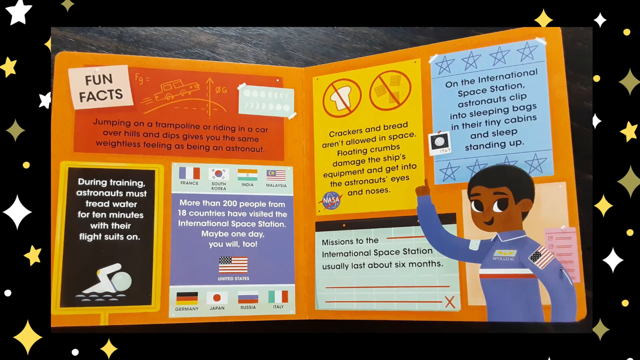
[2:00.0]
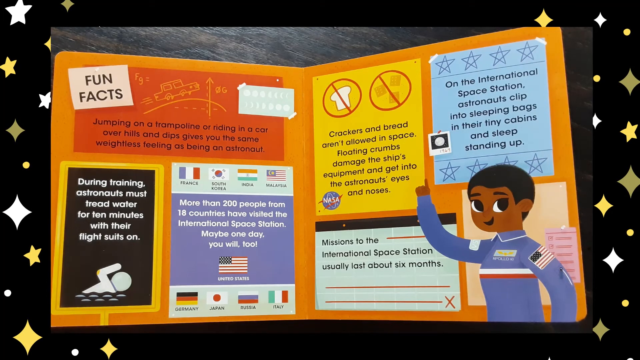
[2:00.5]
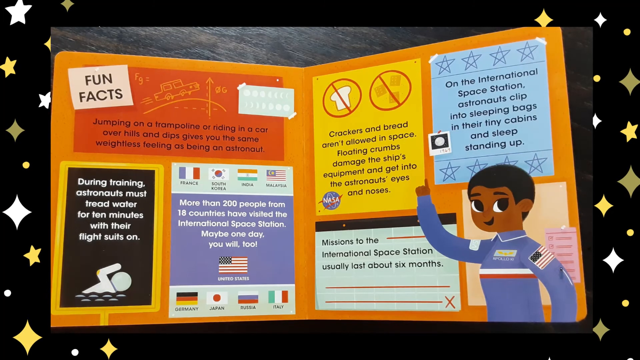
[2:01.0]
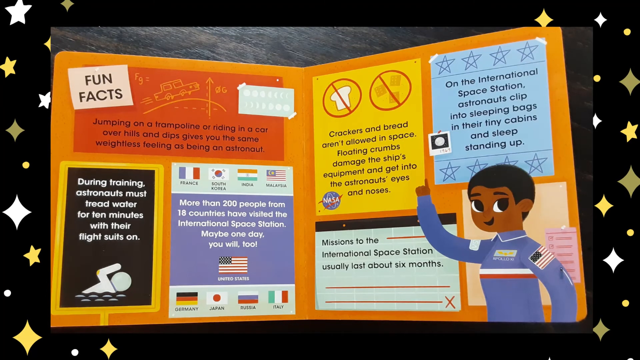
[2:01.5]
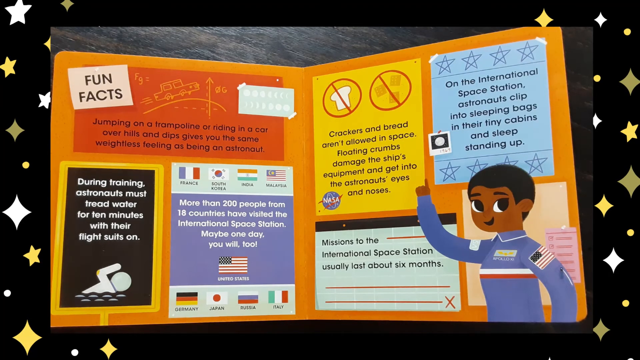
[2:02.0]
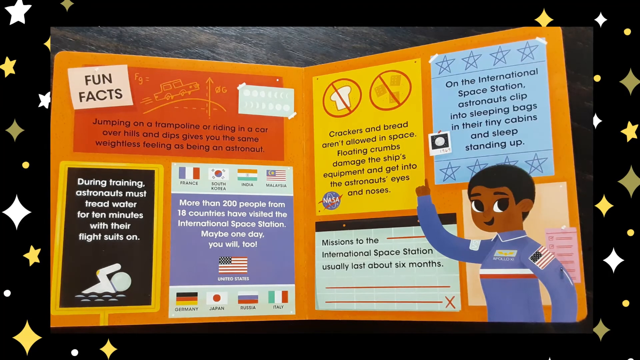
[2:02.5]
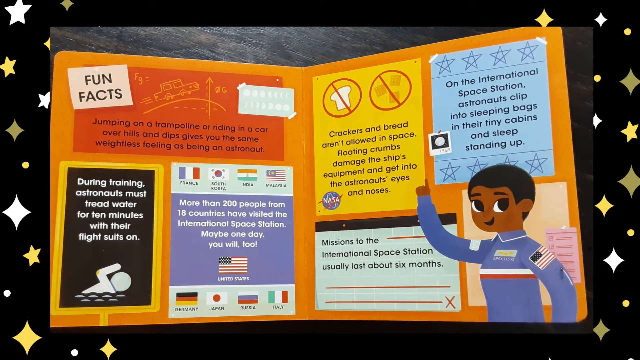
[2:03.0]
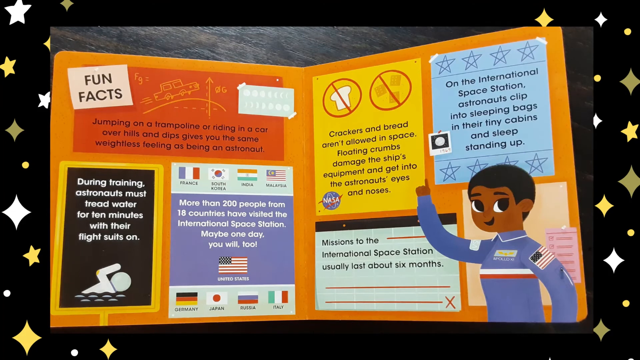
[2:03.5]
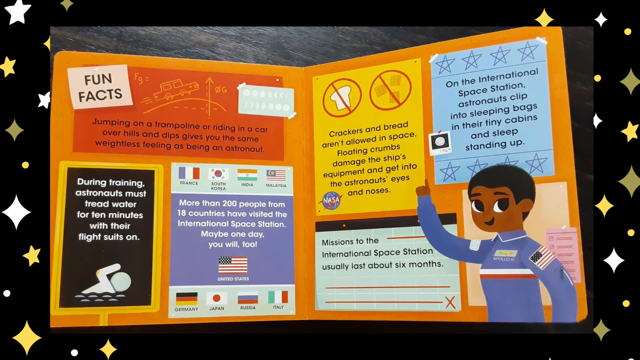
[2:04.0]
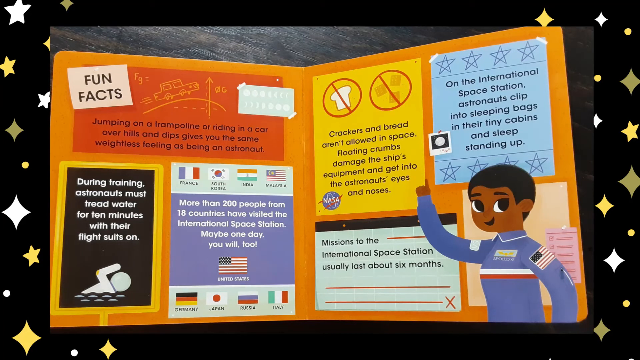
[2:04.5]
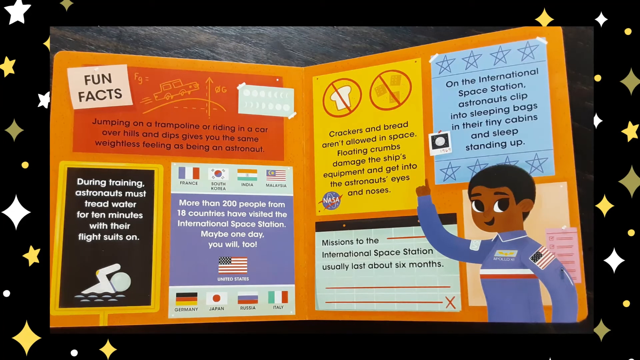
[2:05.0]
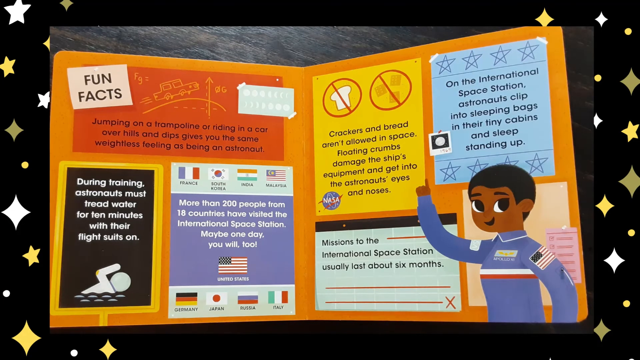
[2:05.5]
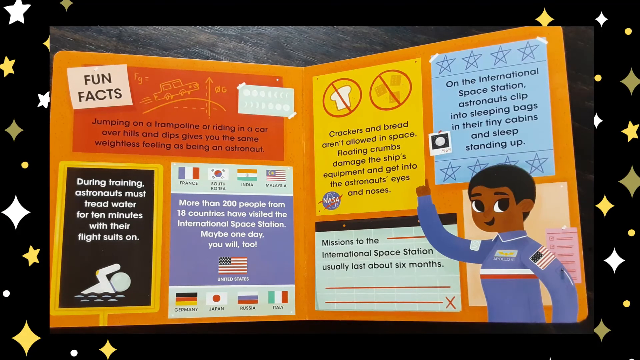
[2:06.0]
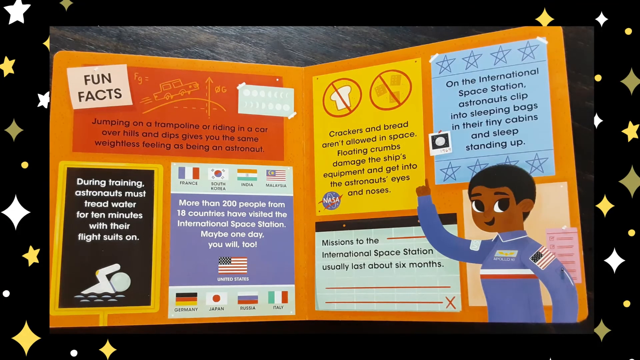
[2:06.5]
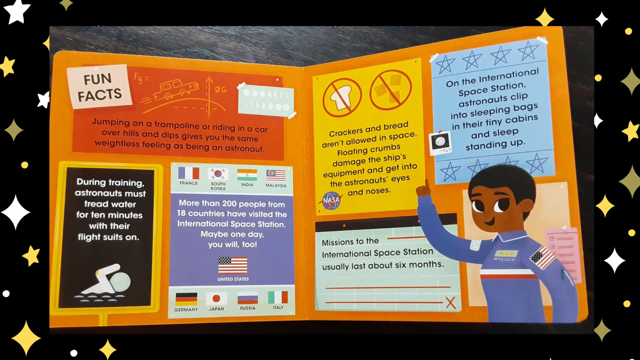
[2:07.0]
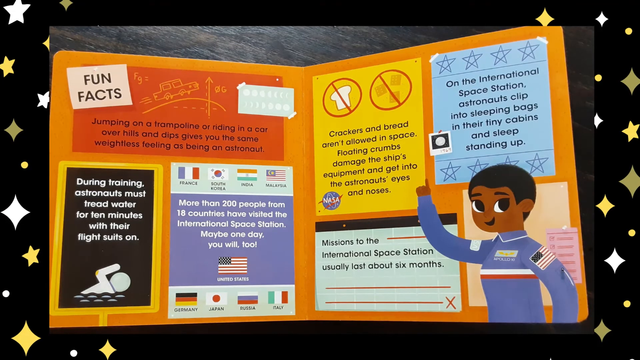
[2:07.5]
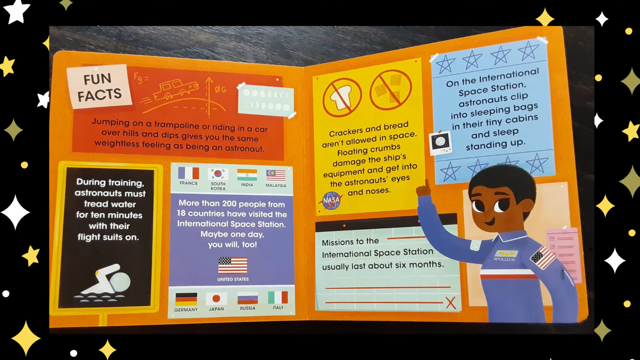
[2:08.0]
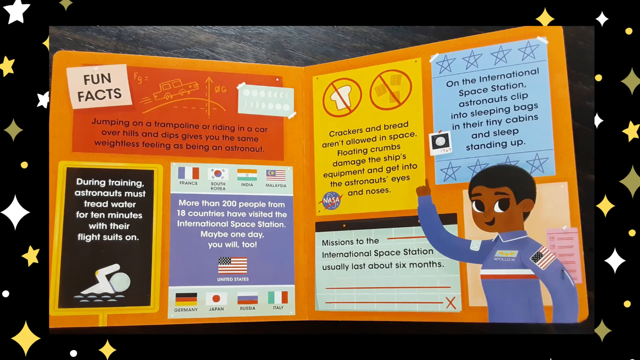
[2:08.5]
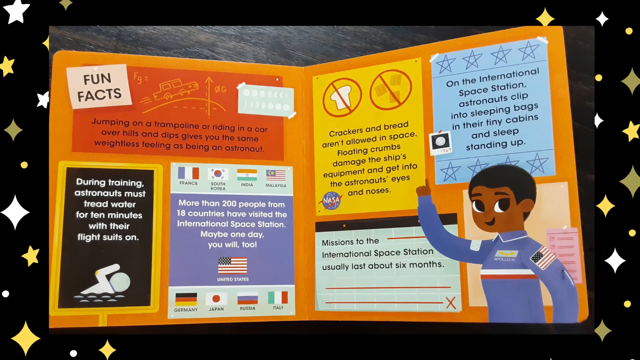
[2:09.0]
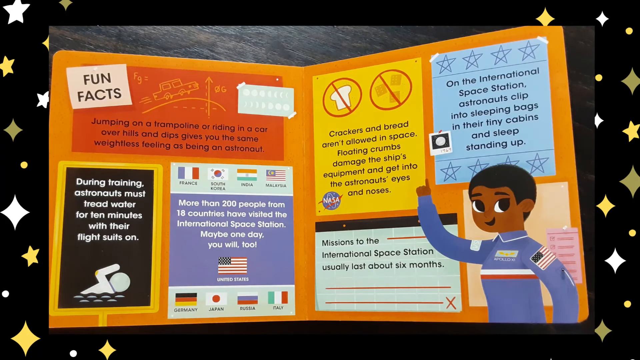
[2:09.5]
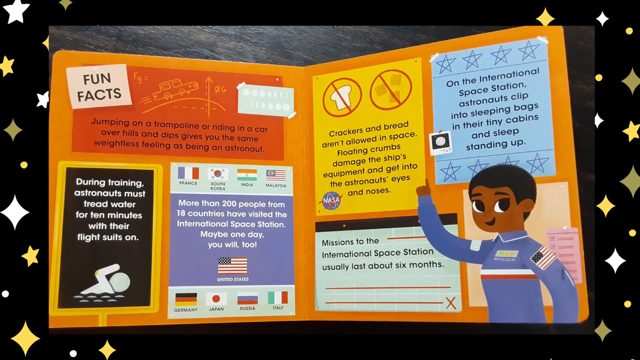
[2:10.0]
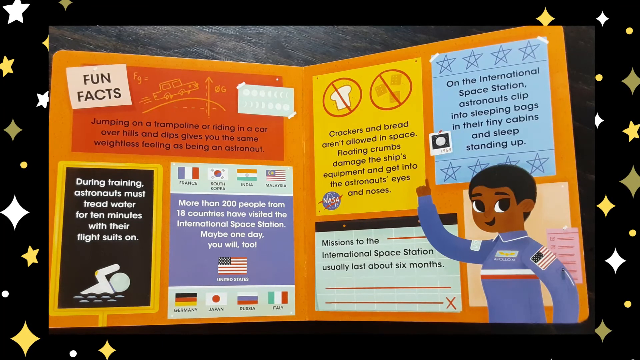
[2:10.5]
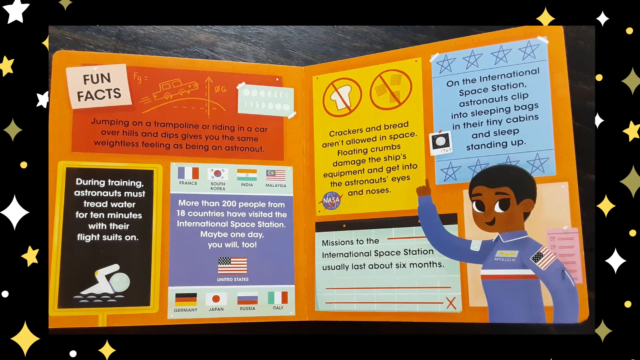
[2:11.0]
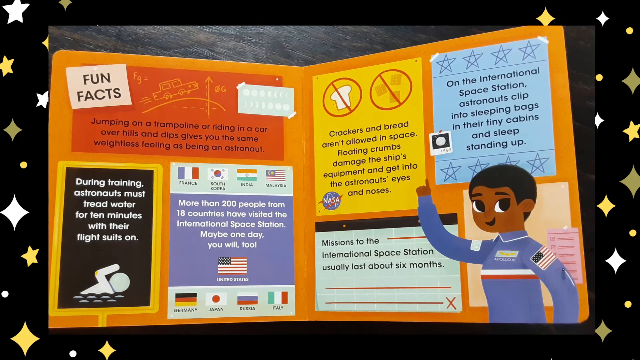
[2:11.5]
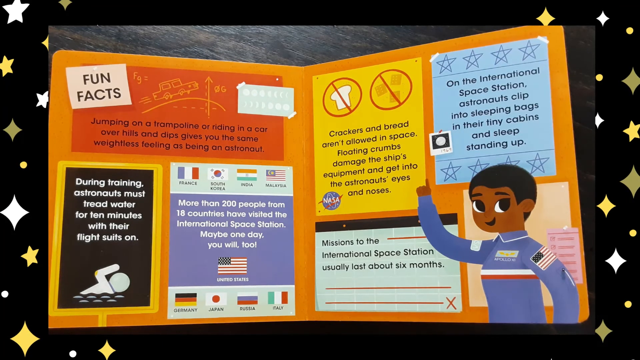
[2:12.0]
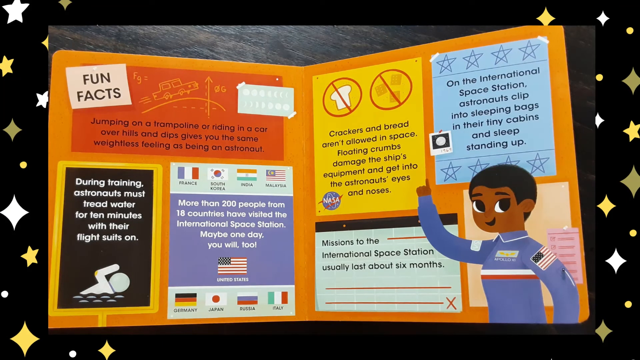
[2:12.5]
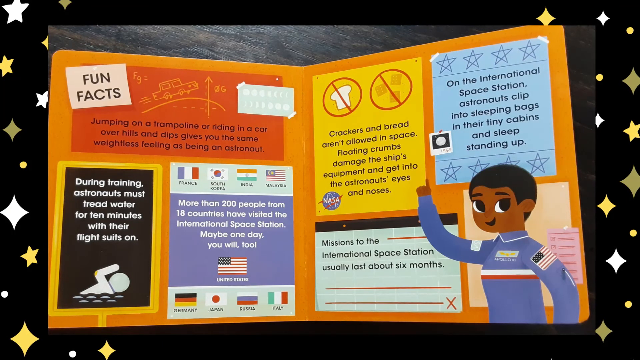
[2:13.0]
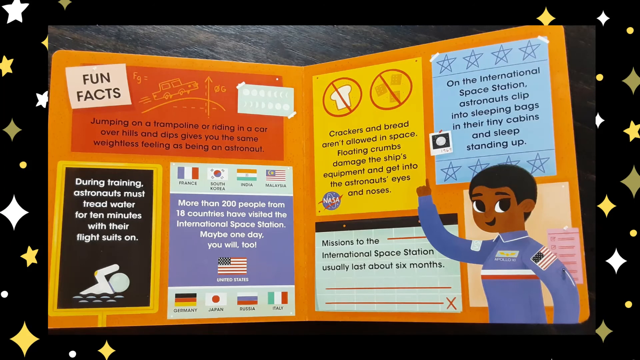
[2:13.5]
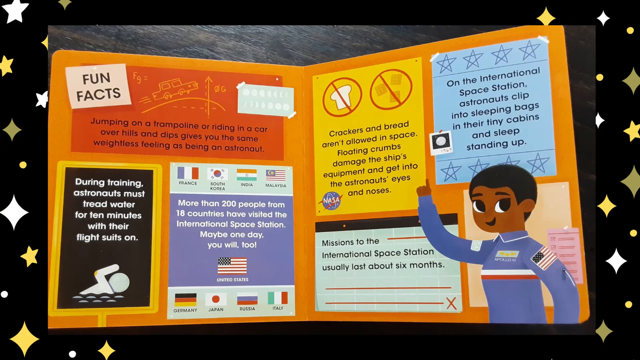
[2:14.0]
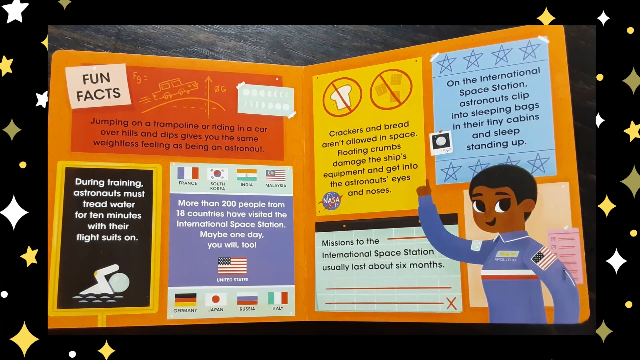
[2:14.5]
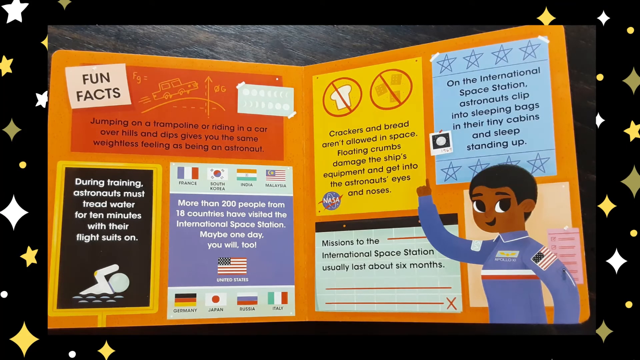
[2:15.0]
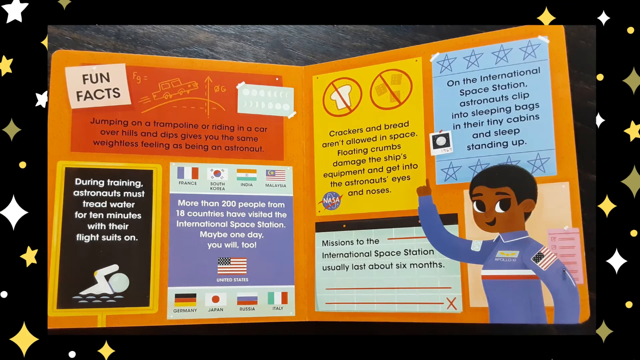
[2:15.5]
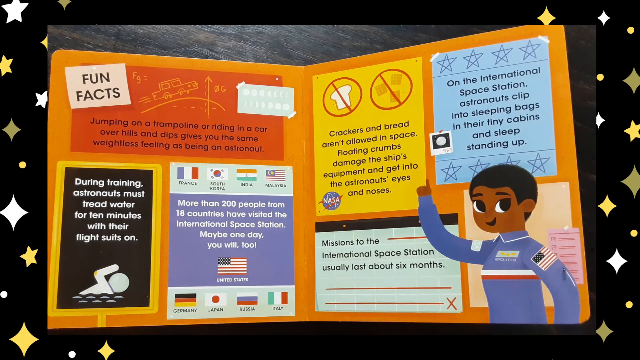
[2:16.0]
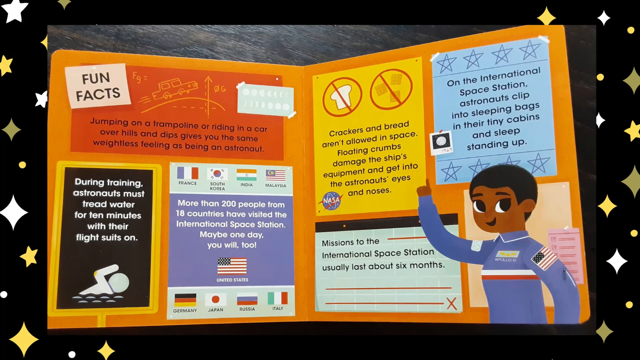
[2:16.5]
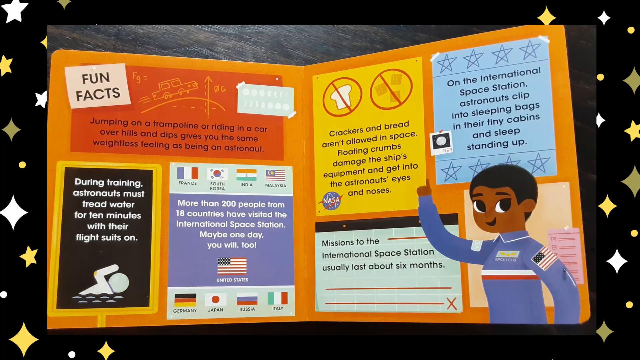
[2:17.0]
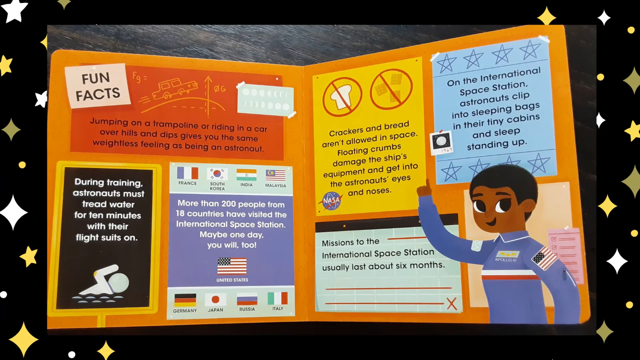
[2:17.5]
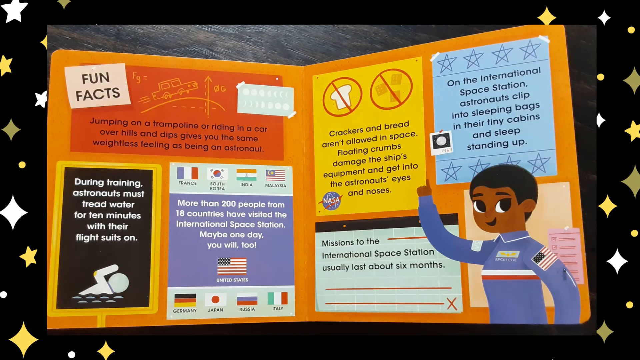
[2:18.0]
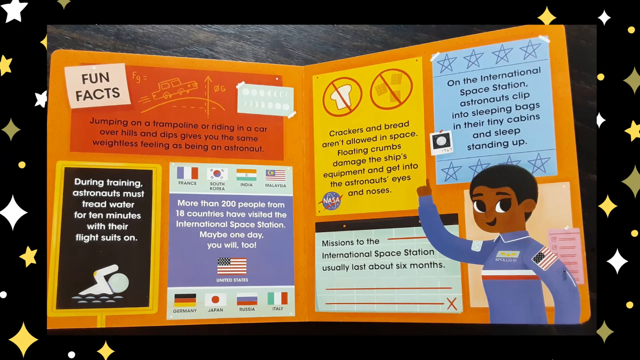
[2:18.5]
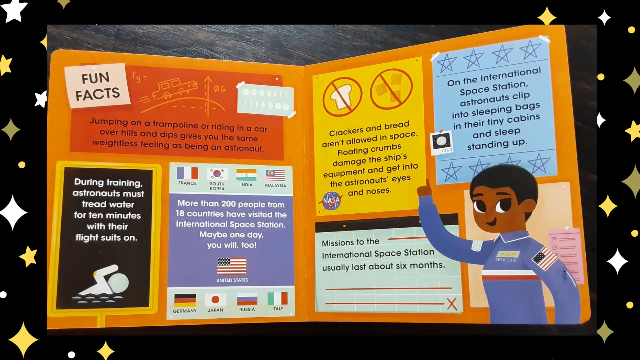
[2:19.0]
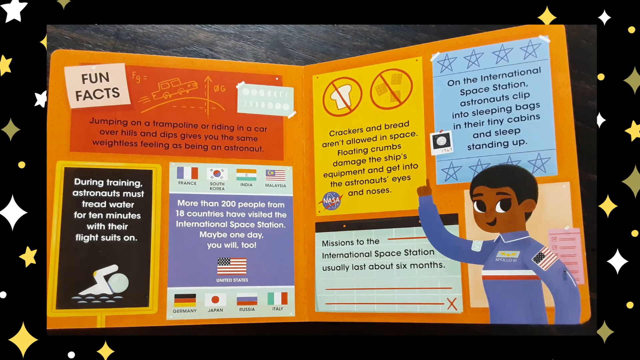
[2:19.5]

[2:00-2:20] The same page stays open with no new page: seven boxes and one astronaut with short hair and a bluish-purplish NASA shirt. The three boxes on the left read "fun facts". The orange box has black text beginning "jumping on a trampoline or riding in a car", about the same weightless feeling as being an astronaut. A box with a yellow and black background has a drawing of a person, apparently during training, with white text about astronauts ending "for 10 minutes with their flight suits on". Another box has different flags, including France, India, Russia and Italy, with text reading "more than 200 people from 18 countries has visited the international space station maybe one day you will too".